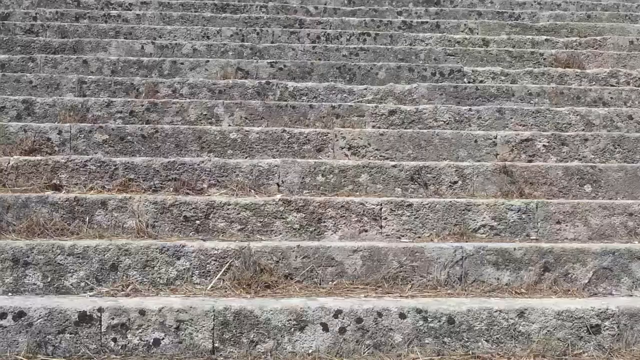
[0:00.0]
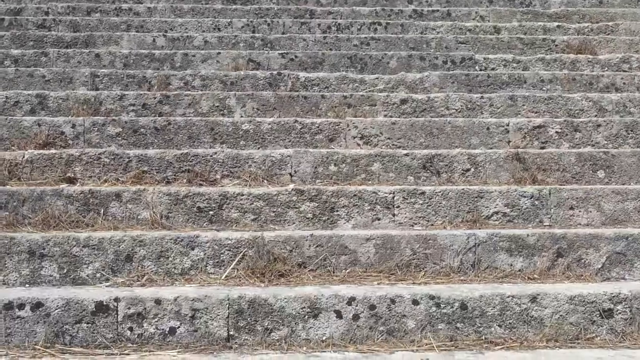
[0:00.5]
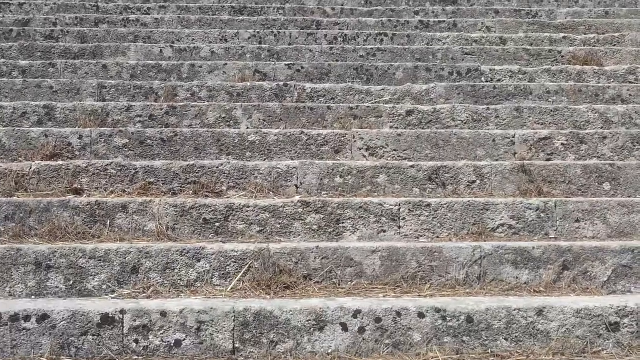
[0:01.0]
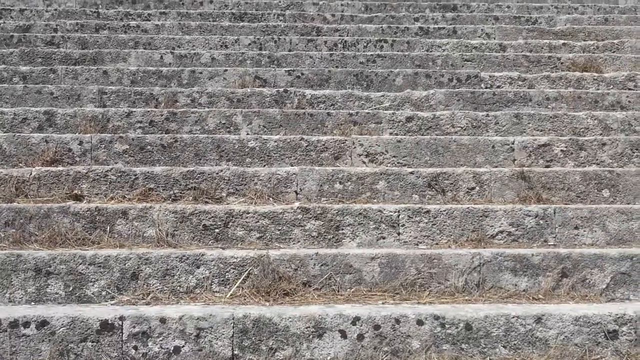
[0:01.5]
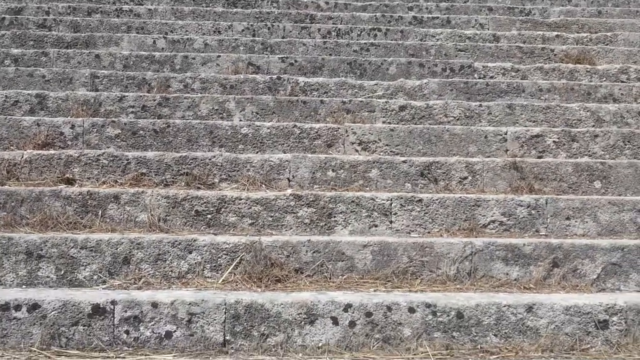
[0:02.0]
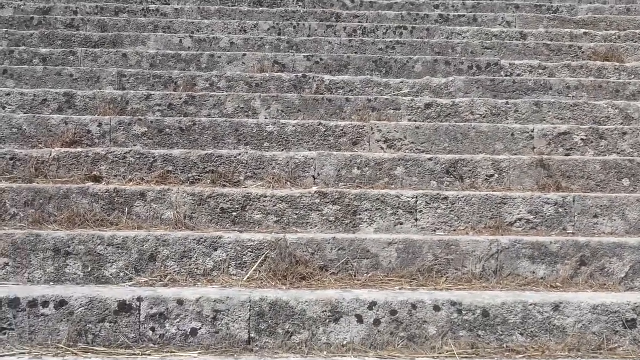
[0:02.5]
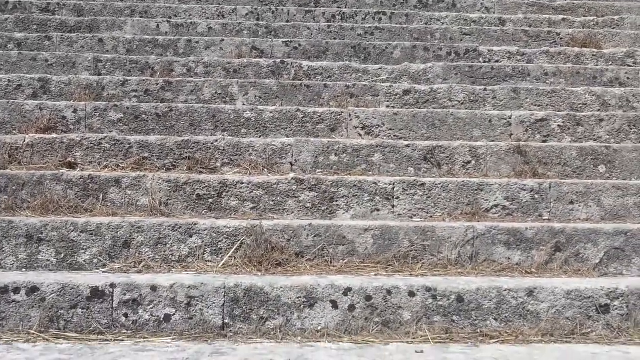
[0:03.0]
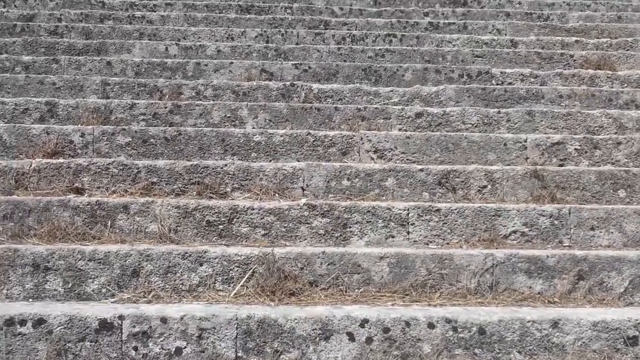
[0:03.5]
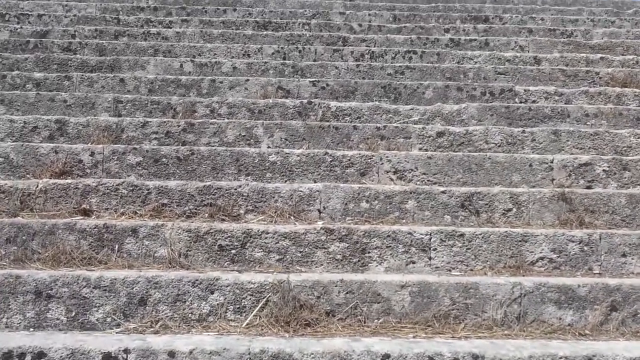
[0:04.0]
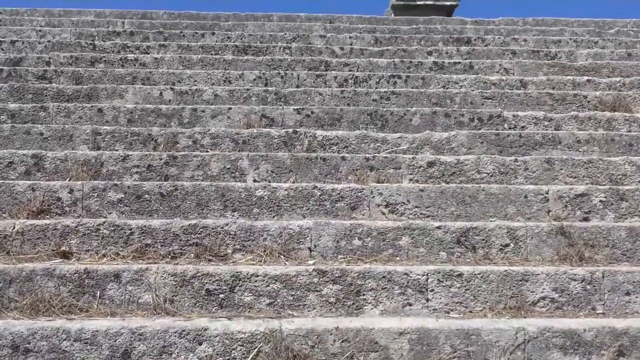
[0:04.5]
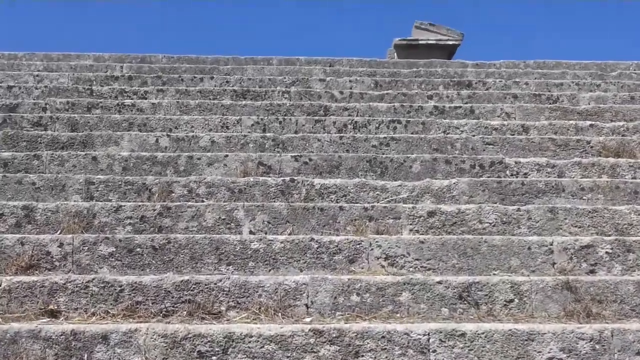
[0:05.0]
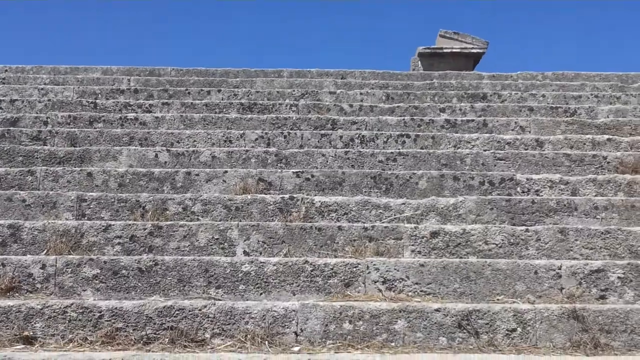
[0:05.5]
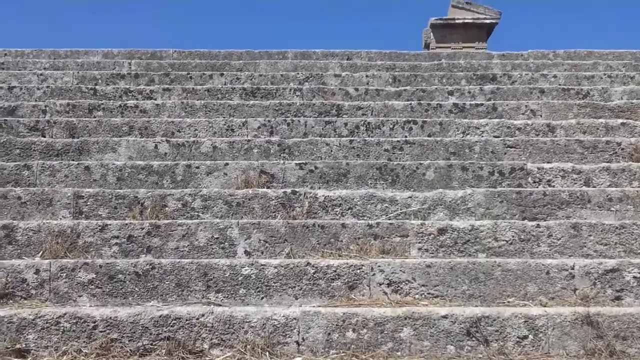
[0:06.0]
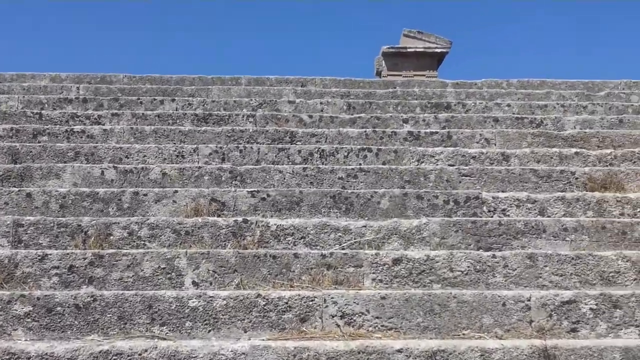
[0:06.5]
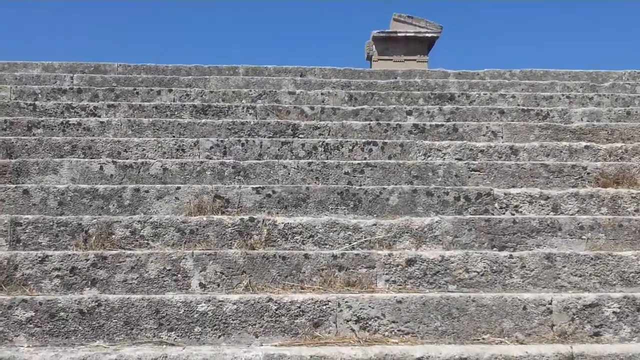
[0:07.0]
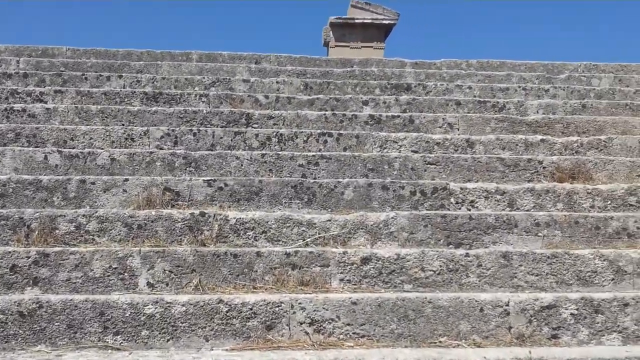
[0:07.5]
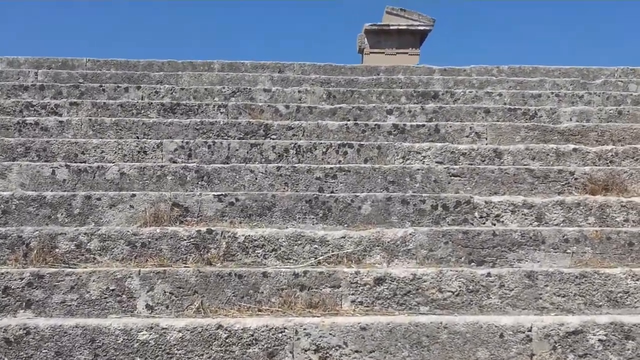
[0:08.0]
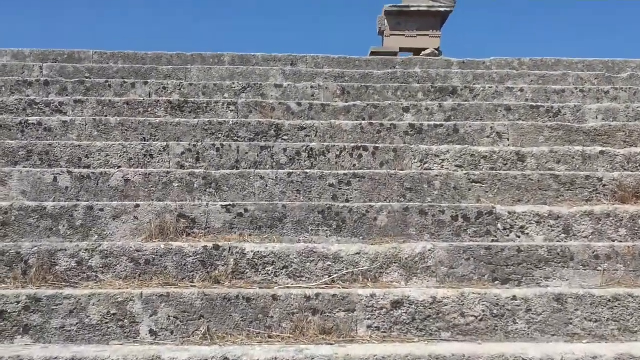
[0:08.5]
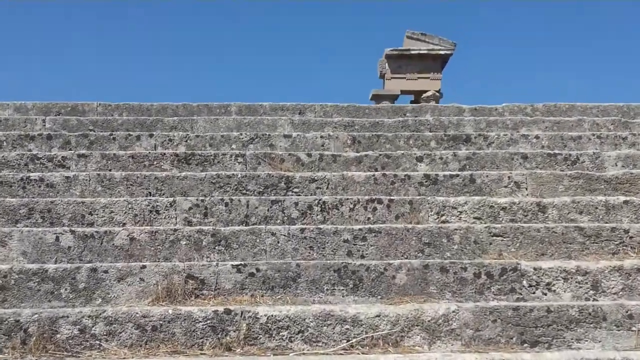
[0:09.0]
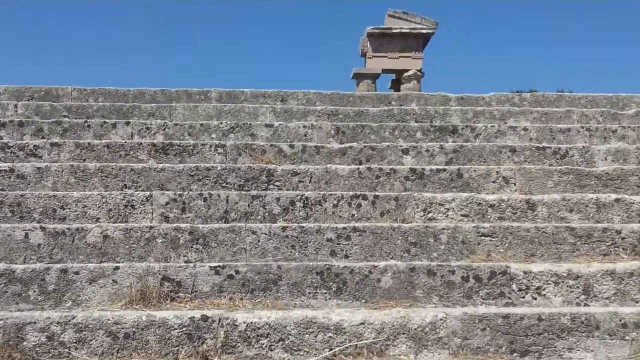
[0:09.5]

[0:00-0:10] Someone walks up a set of very large stairs belonging to what looks to be a type of ruin or pyramid. The stairs are very old and made of stone, with some vegetation on them that looks to be mostly dead but long-established, some sort of moss. The steps look worn, as if many people have walked on them many times, and the spot appears to be quite high up, as if it would take a long climb to get there. It is a very sunny day with not a cloud in the sky. As the person nears the top of the stairs, a little more of the ruins comes into view, sticking out, including a large column of what looks to be the same stone sticking out above the top of the stairs.